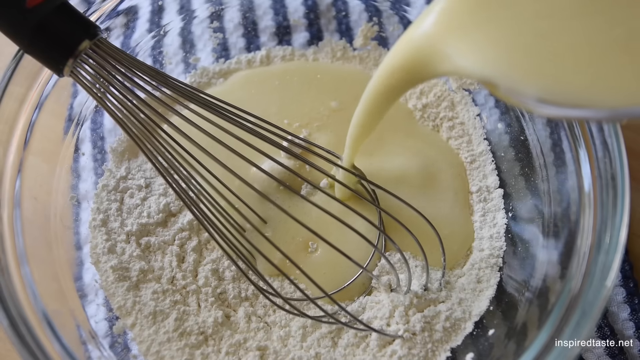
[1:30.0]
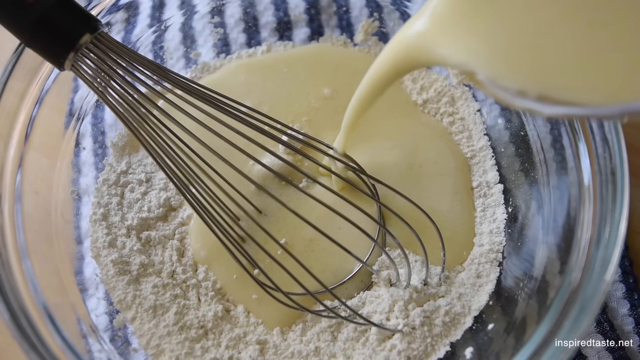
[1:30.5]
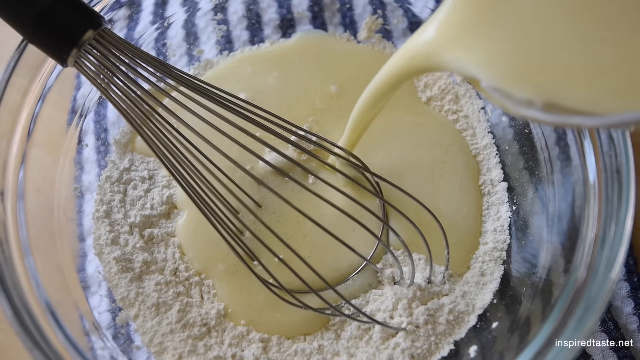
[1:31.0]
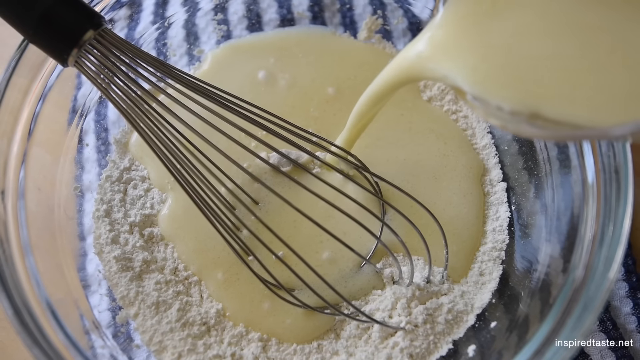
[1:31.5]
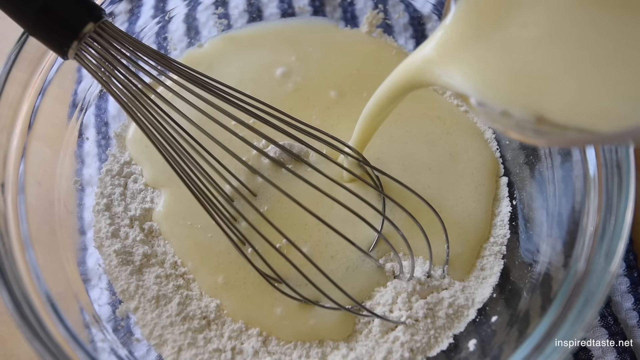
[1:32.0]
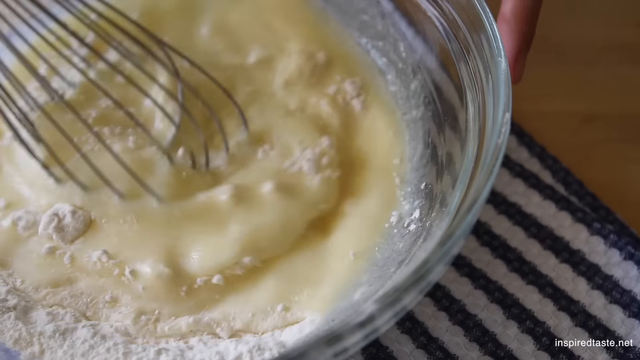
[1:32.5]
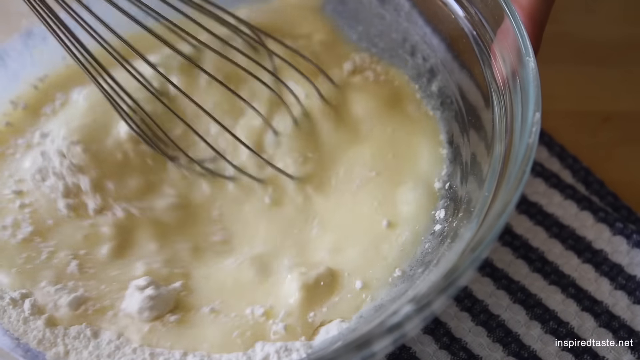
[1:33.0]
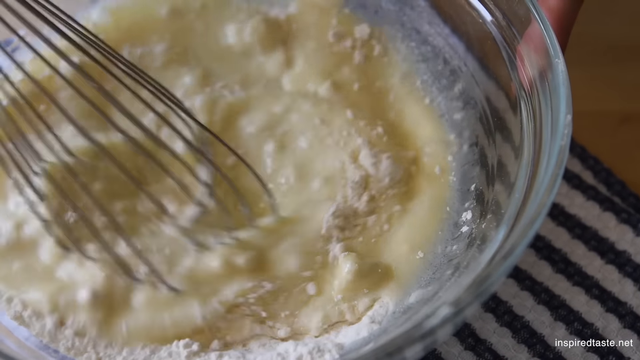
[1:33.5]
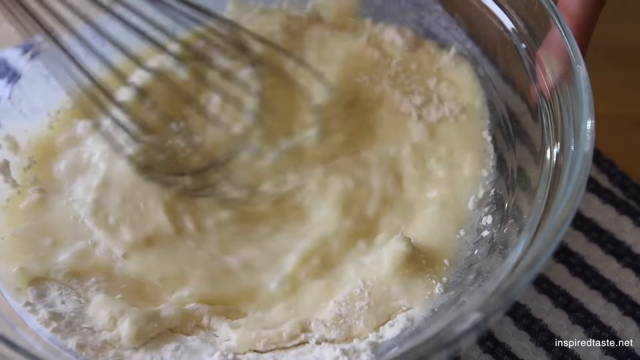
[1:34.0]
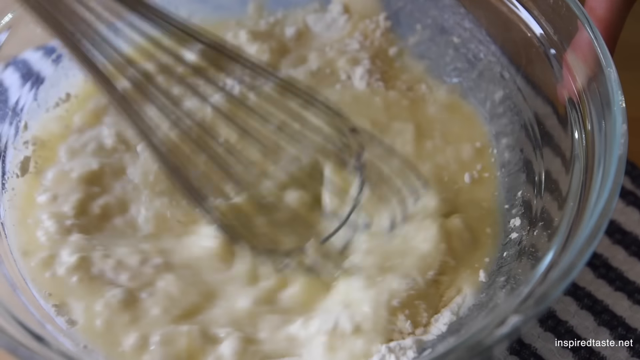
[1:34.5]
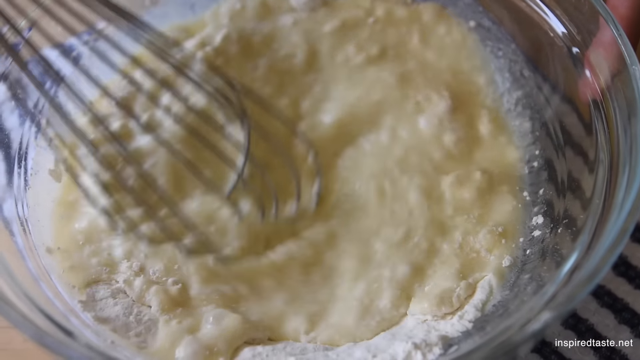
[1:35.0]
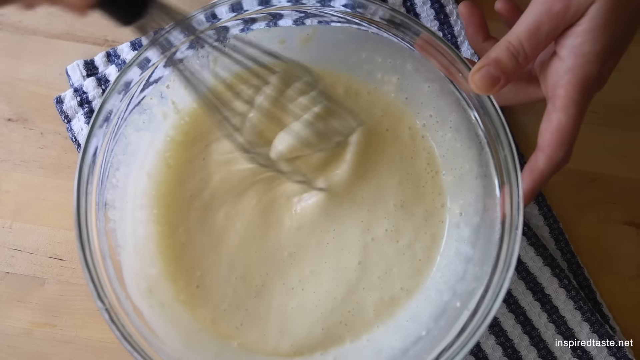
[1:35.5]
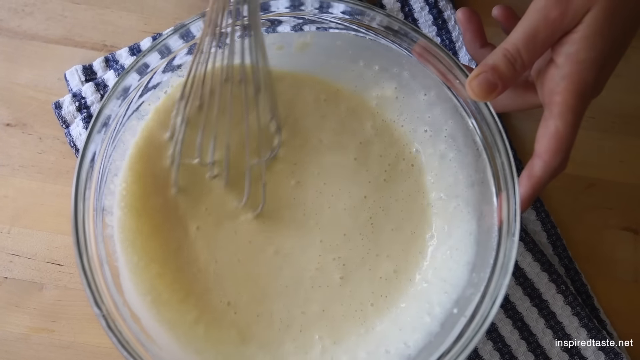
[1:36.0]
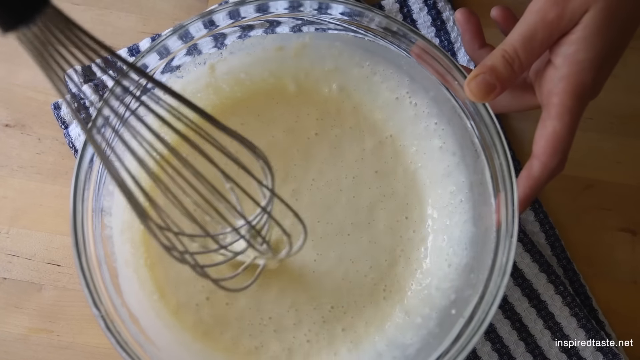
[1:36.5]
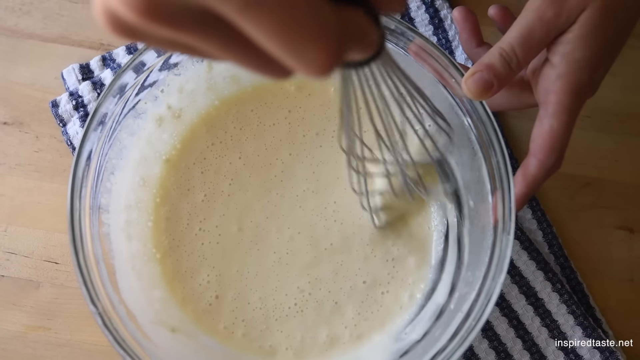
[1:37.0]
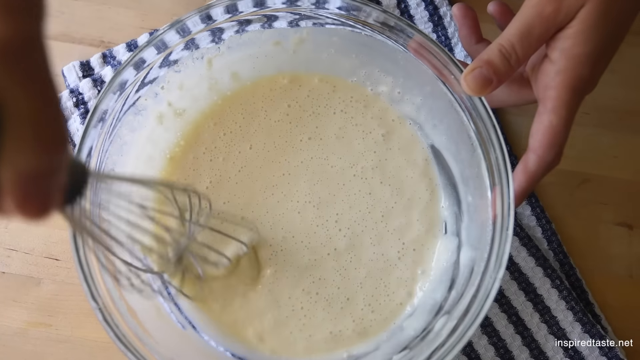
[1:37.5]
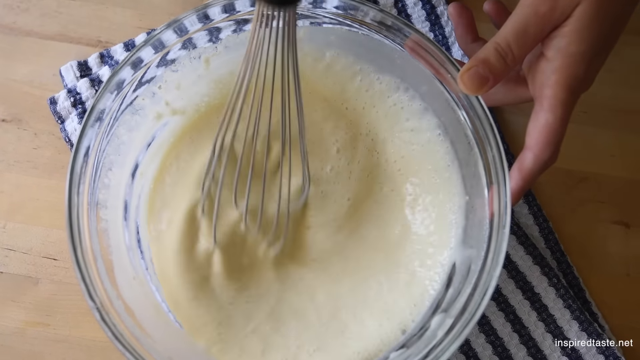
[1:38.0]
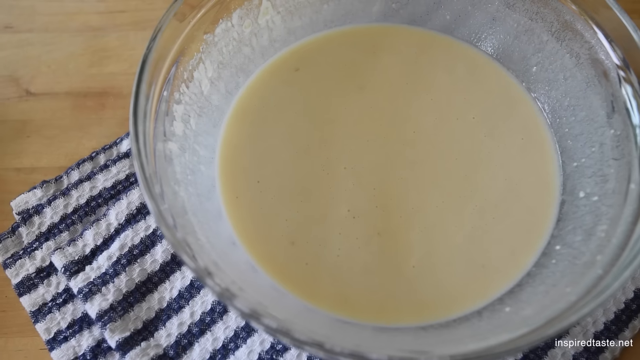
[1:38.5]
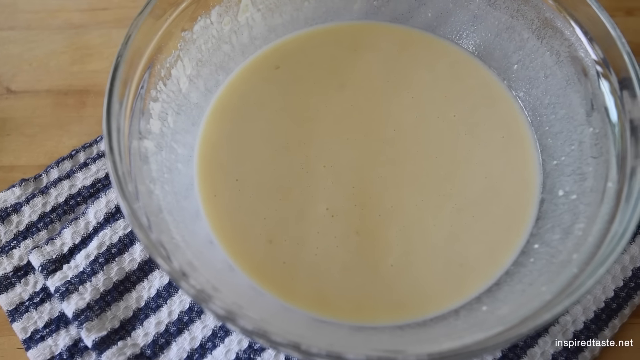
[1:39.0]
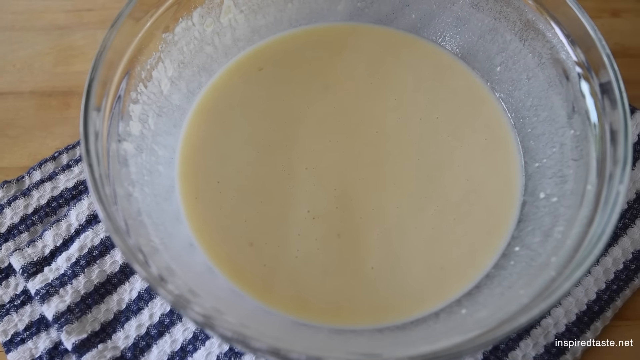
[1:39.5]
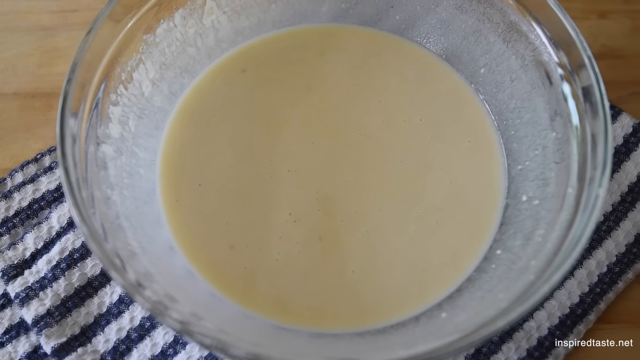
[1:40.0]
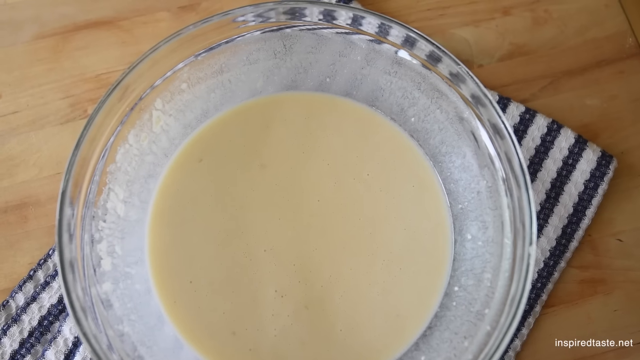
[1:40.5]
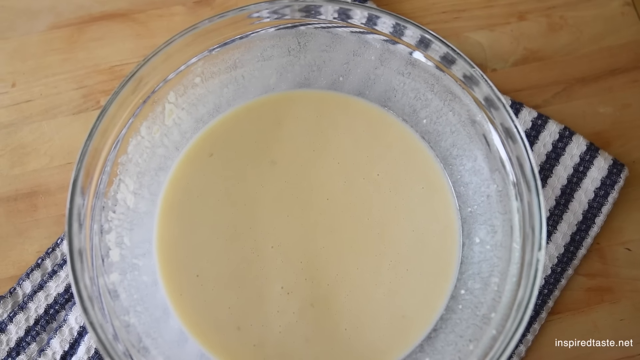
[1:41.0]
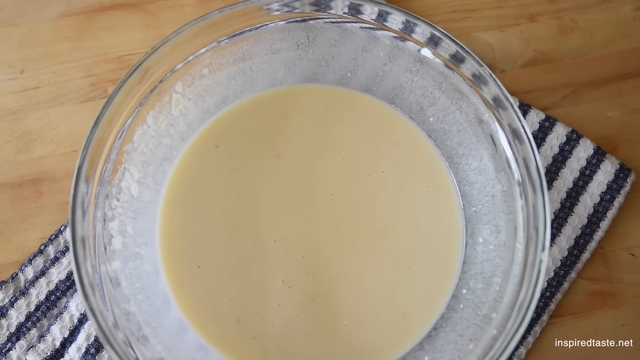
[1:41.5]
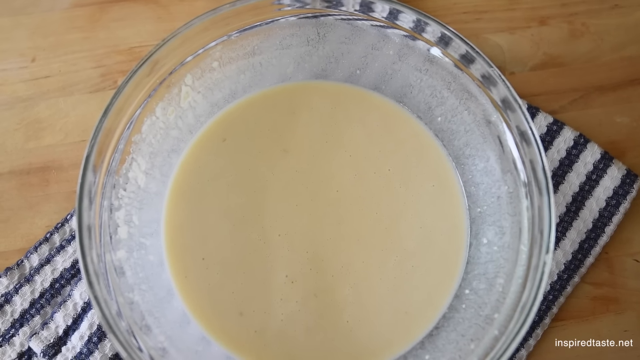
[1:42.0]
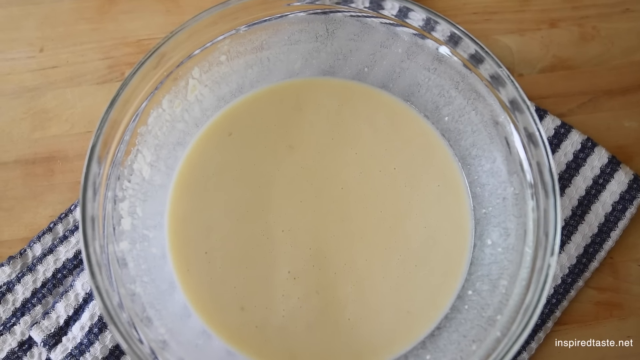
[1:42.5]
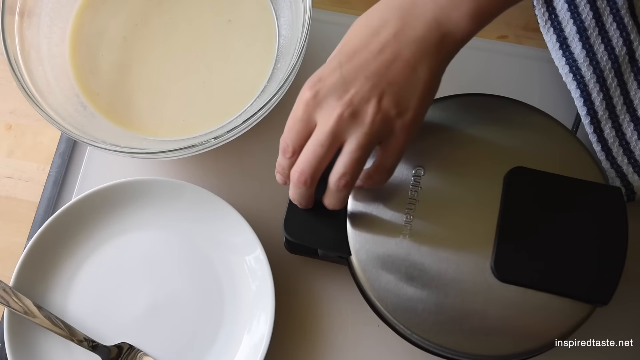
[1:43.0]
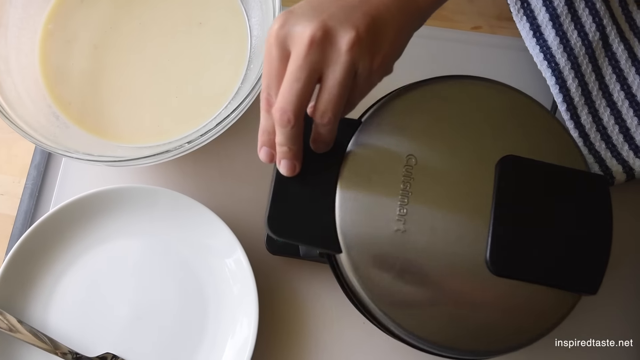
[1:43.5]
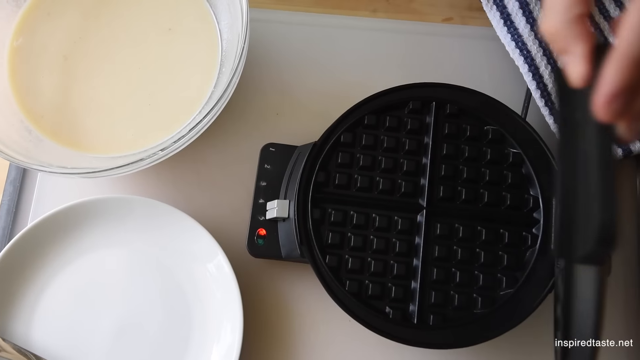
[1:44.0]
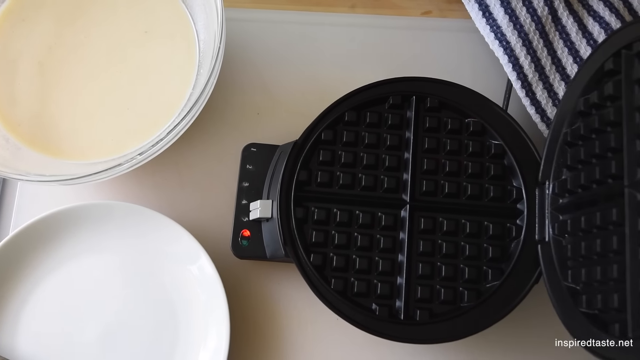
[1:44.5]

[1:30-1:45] The YouTube video's still shows four triangle waffles piled on top of each other with butter and syrup on top and strawberries to the left, all on a white plate that shows reflections of a window nearby. After play is pressed, a measuring cup pours wet ingredients into dry ingredients in a white clear bowl, and everything is whisked with a whisk held in the right hand; the lumps disappear and the result is a very light, watery batter. The bowl is sitting on a blue and white dishcloth whose stripes are visible underneath it. When the whisking is done, the camera pans over to a waffle iron being opened. It has a red light on, apparently showing it has been heating up, and makes one big waffle that comes out in four pieces that can be cut apart. The waffle iron is very clean.